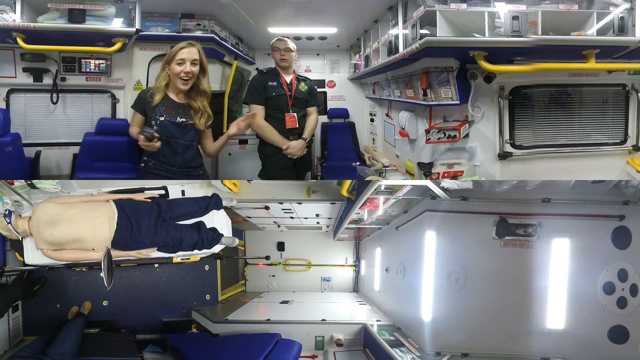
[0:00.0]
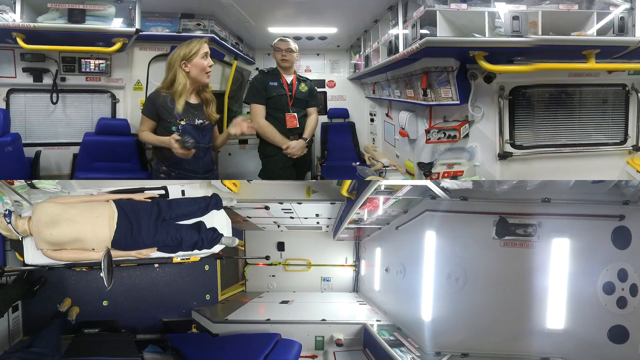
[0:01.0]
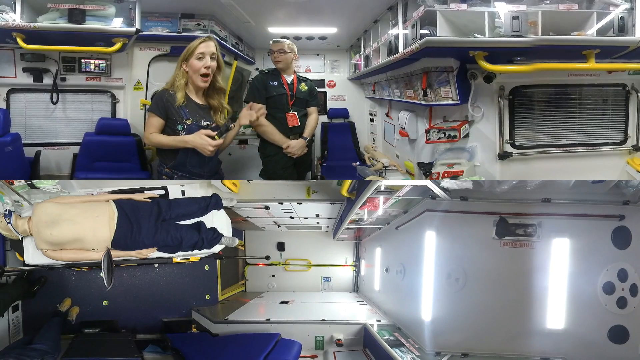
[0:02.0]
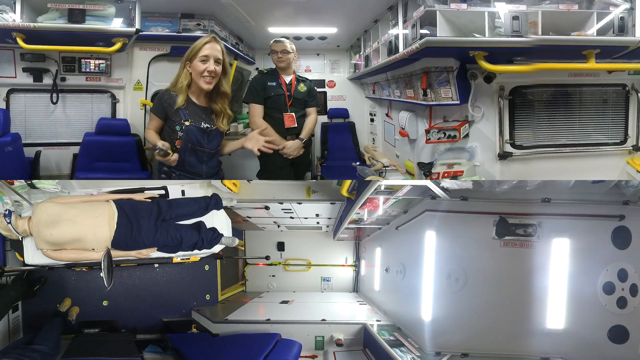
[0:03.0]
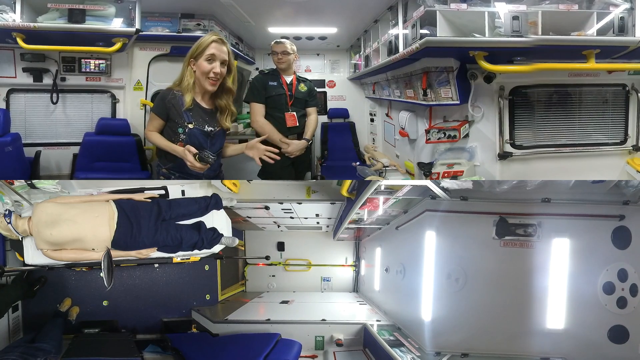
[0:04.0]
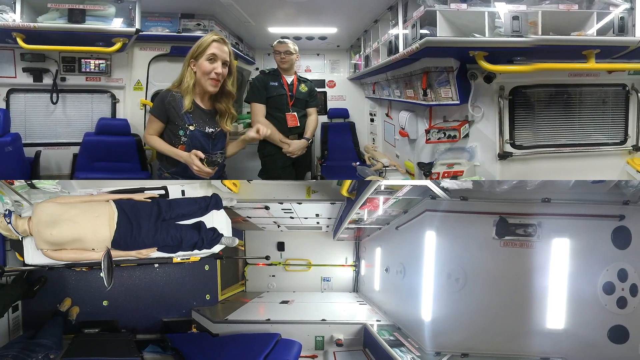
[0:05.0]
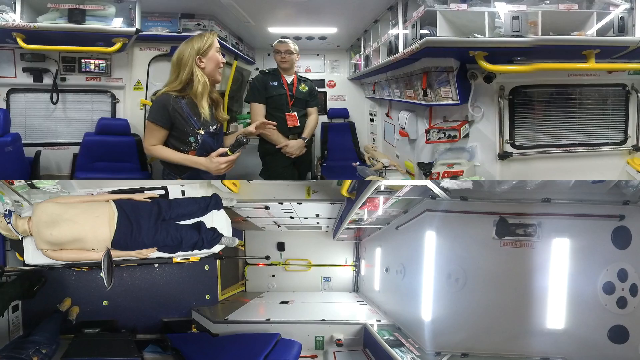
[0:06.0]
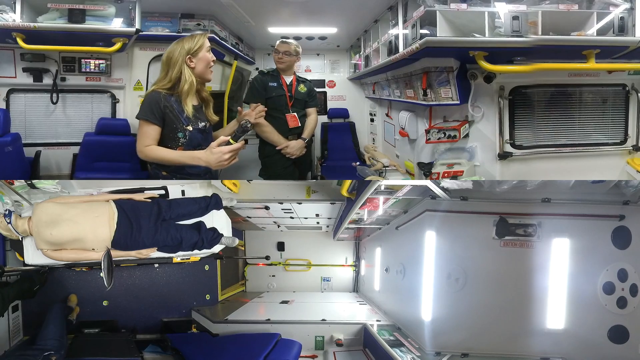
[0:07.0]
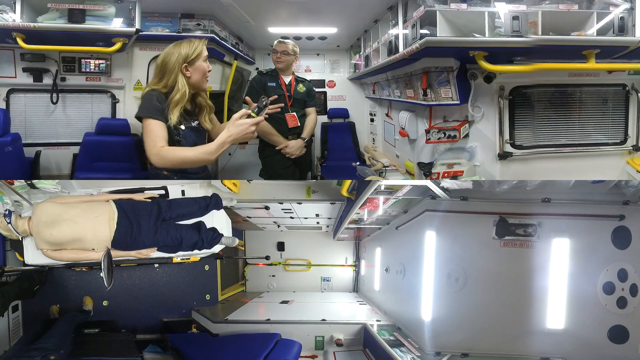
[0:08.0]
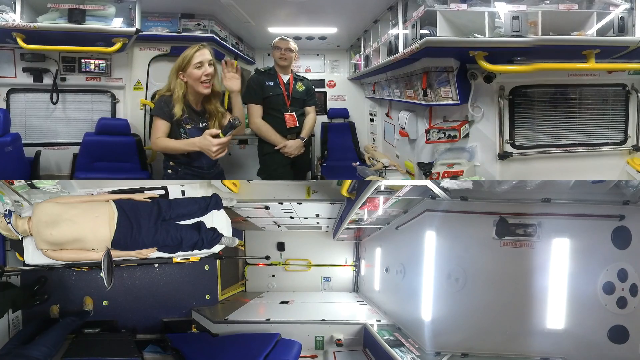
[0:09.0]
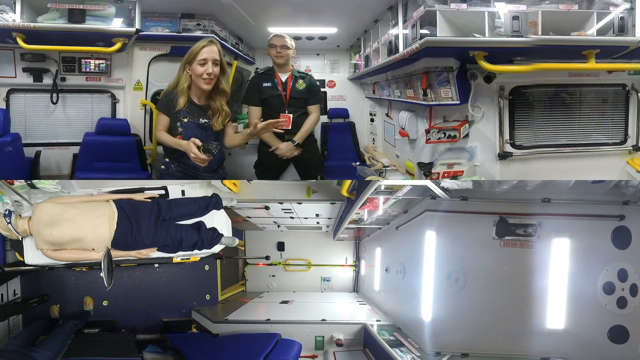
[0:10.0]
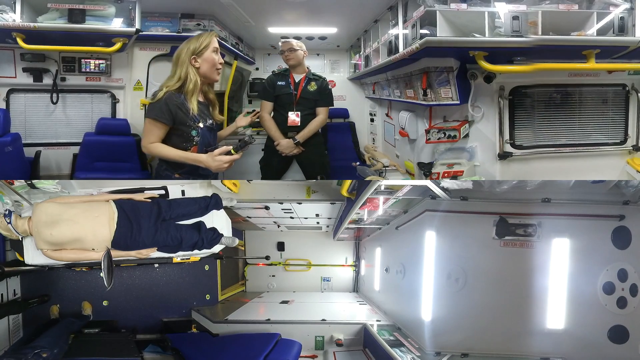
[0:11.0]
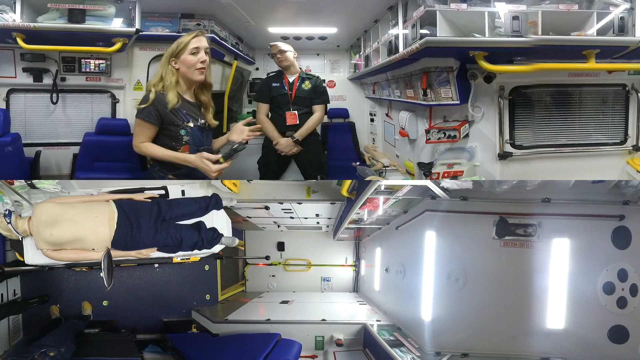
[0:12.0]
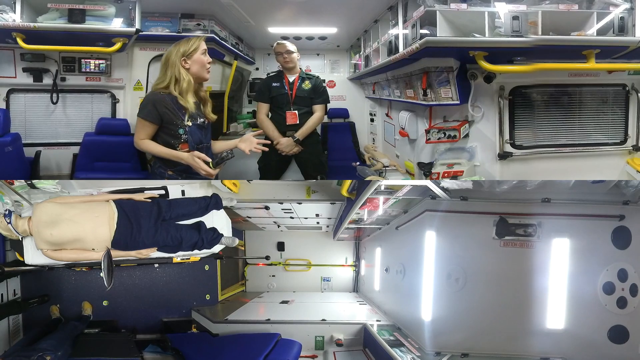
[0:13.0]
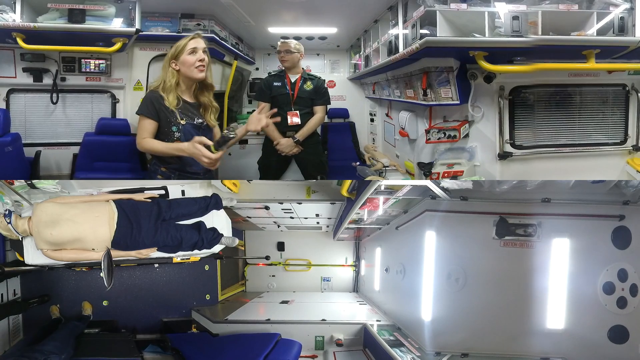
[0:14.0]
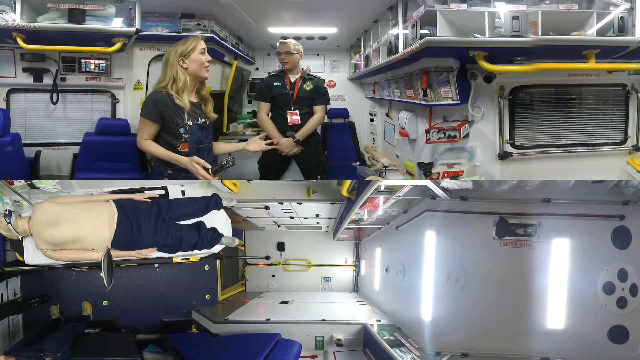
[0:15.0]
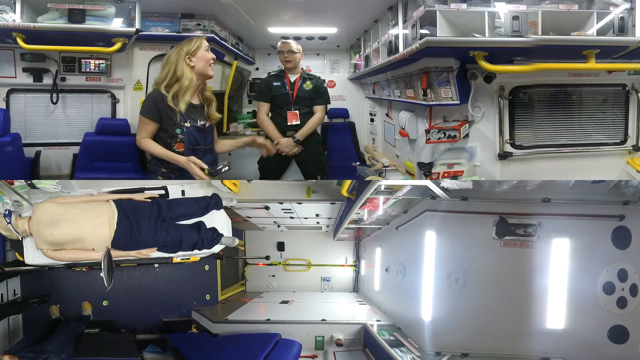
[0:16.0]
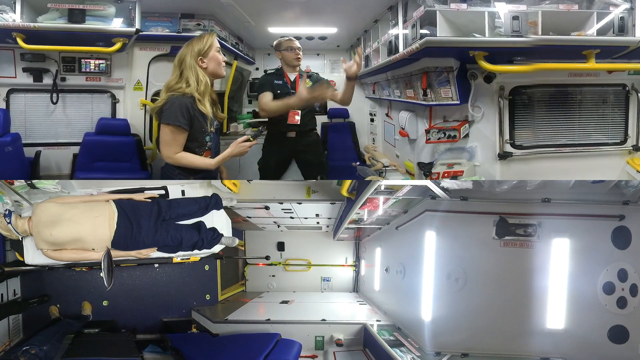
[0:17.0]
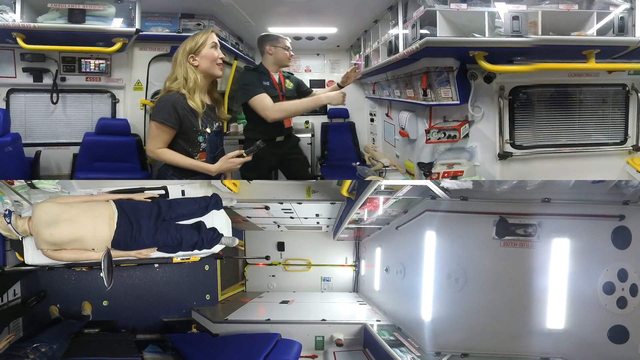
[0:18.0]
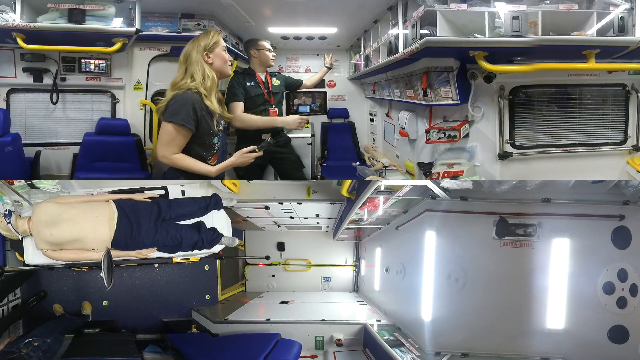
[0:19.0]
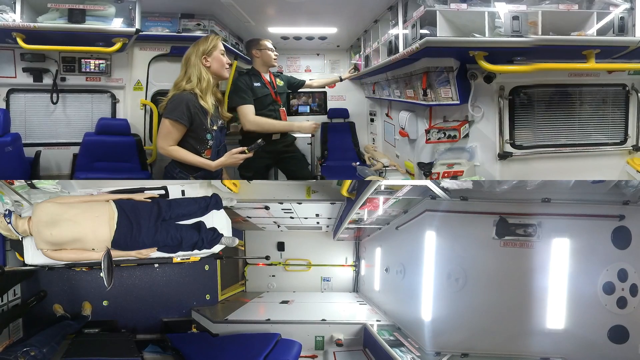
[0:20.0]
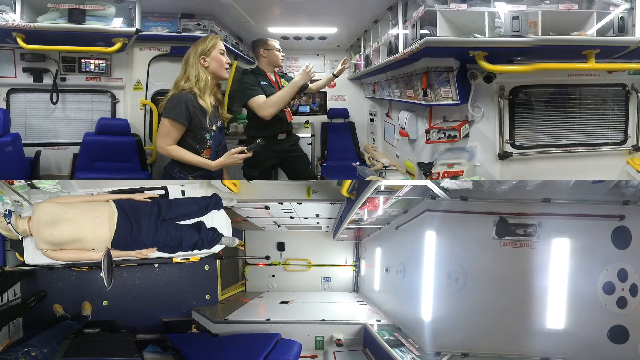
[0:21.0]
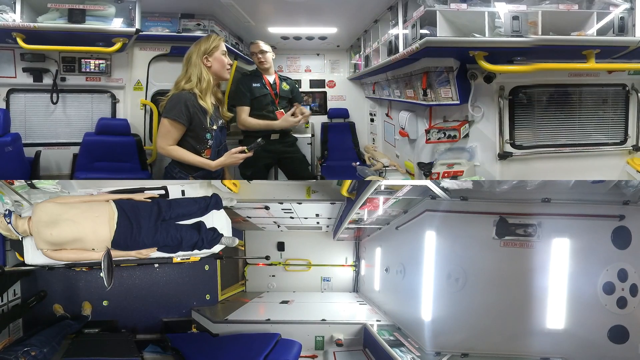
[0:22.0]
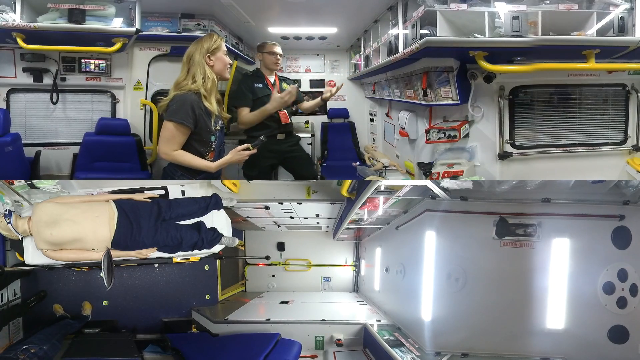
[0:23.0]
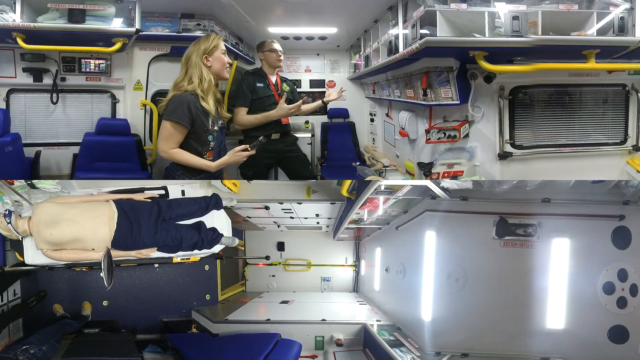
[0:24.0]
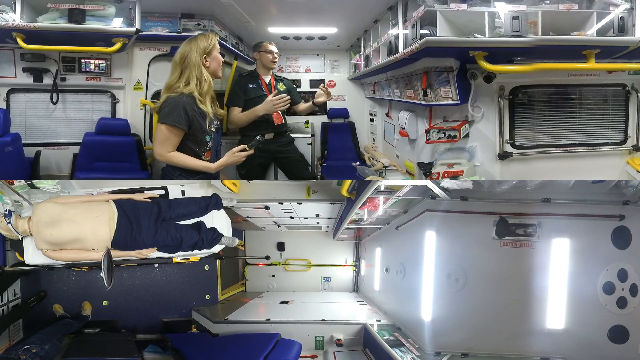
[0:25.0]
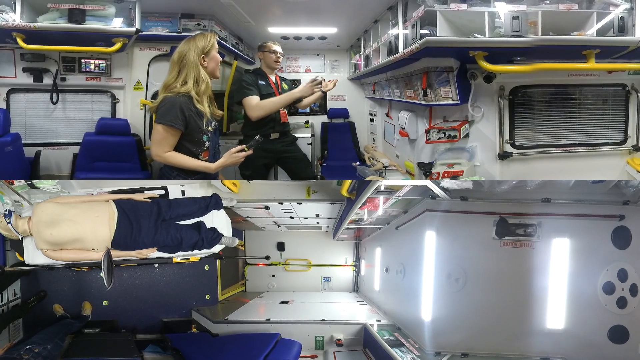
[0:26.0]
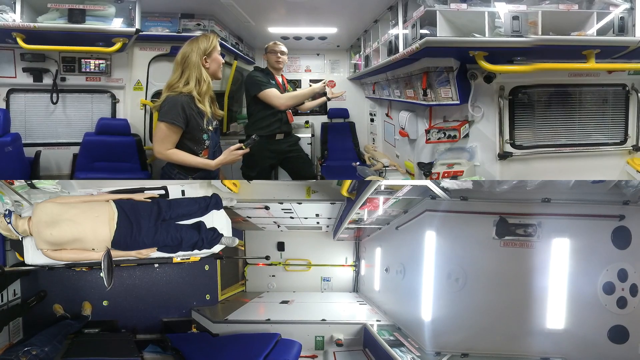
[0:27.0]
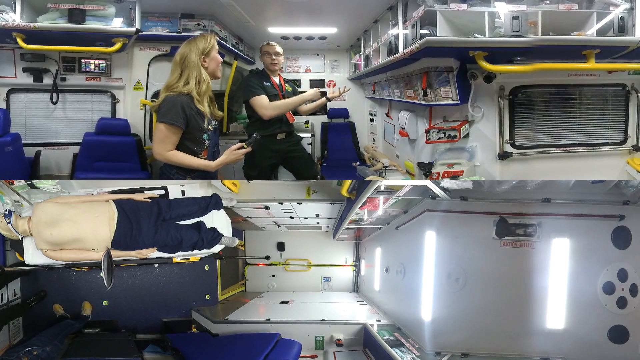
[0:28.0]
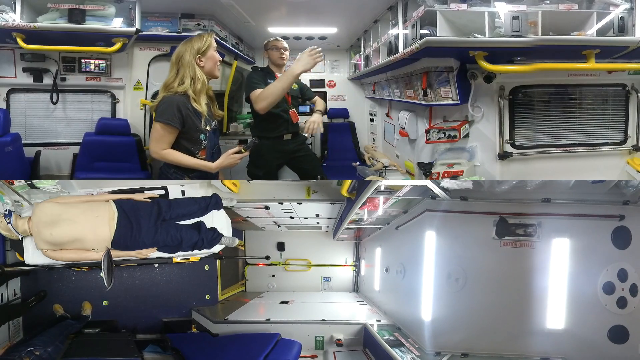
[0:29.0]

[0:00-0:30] Two people seem to be talking, apparently inside some type of vehicle, possibly a ship. The woman doing most of the talking appears very small and might be a little person; at the very beginning a play button blocks her full body, so she looks like a person of average height until more of her is visible. Her limbs do not look typical of a little person, and the image may be distorted, possibly on purpose. The man next to her looks more like a person of average proportions. The woman is Caucasian, has long blonde hair, is maybe in her 30s, and wears a t-shirt with what look like denim overalls and a pair of tan-colored shoes. The man seems a little older, maybe late 30s or early 40s, and appears to be wearing a uniform: a black button shirt and a pair of slacks, with a red tag of some kind around him, as if he might be an employee. There is a blue seat attached to the structure that looks like it has to be pulled down to be used, and there is an overhead part to the structure; the two of them are talking between two structures, and the setting resembles a walking ferry. On the other side of the structure there appear to be a couple of shelves, with maybe a box of gloves. Very close to them, what looks like a dummy is lying on a makeshift pad bed, apparently wearing a swimming mask on its face, possibly for some kind of demonstration.